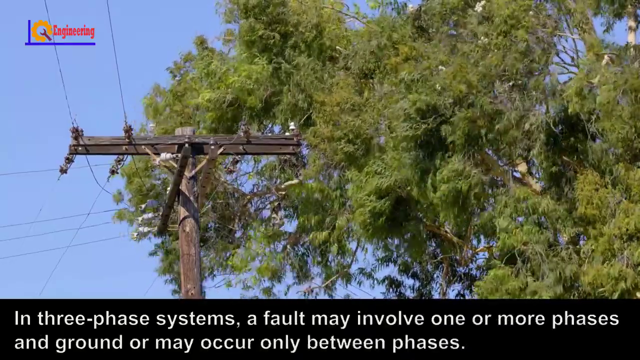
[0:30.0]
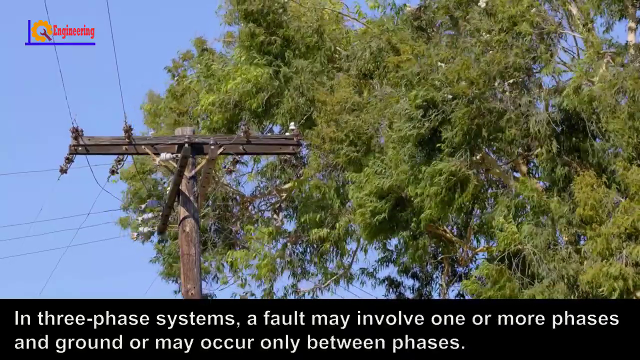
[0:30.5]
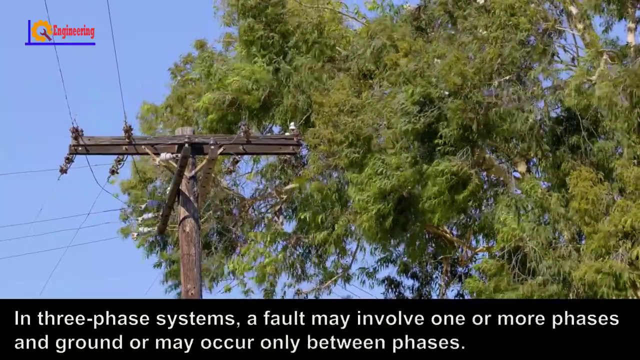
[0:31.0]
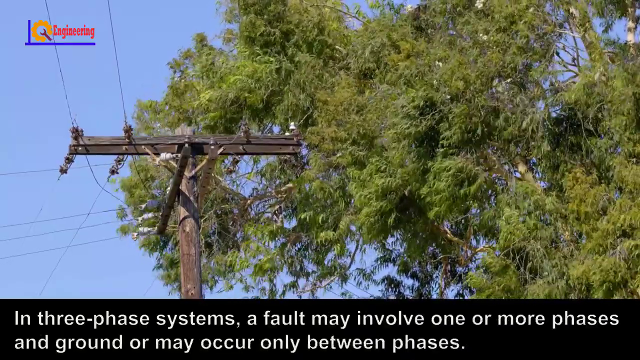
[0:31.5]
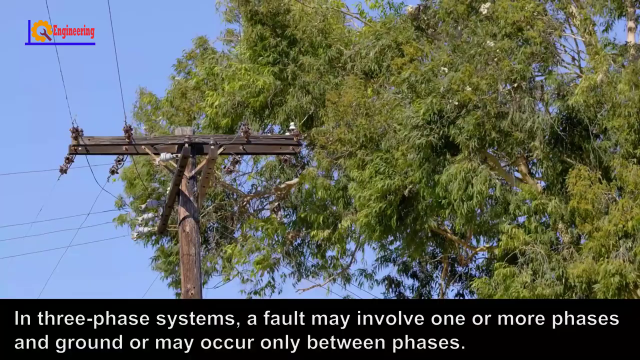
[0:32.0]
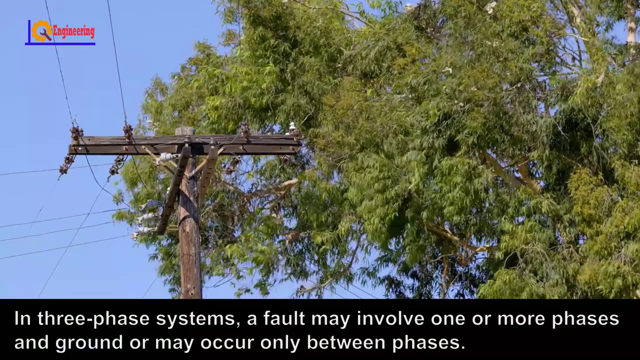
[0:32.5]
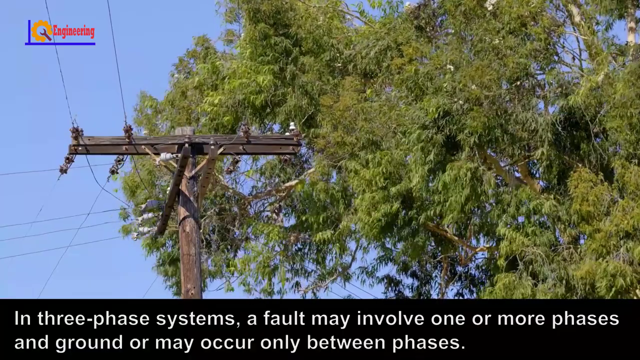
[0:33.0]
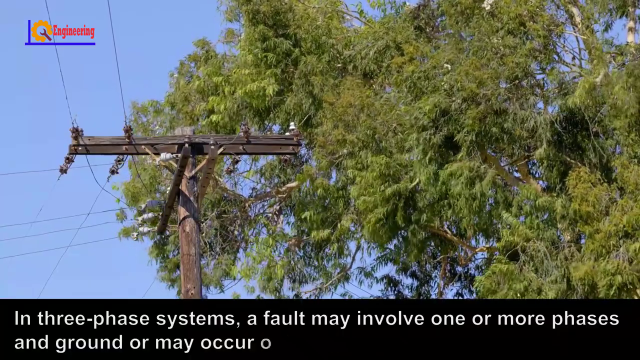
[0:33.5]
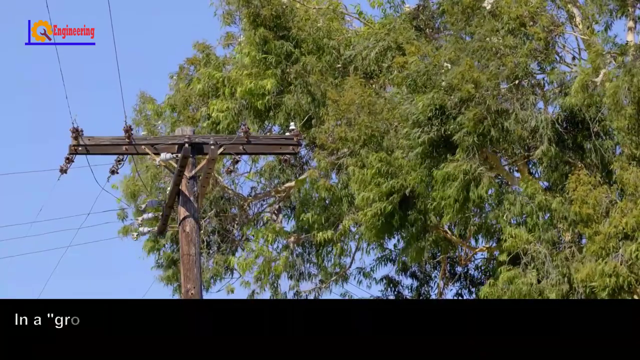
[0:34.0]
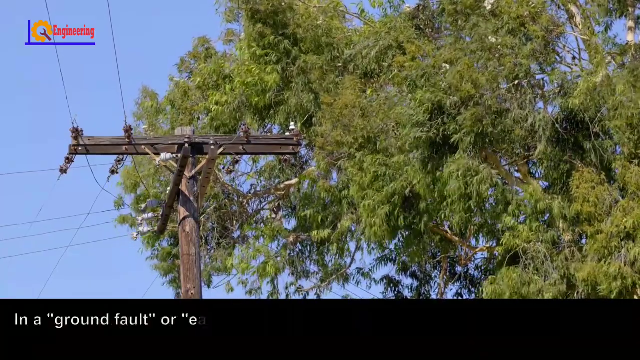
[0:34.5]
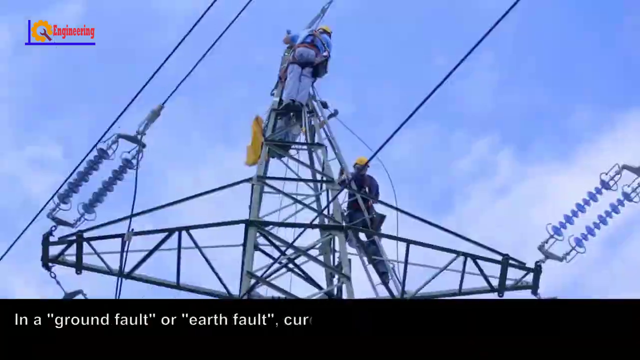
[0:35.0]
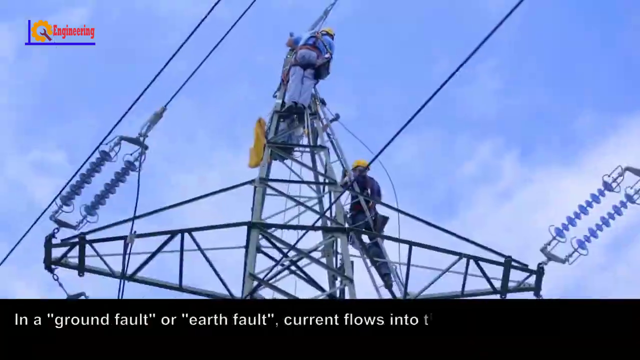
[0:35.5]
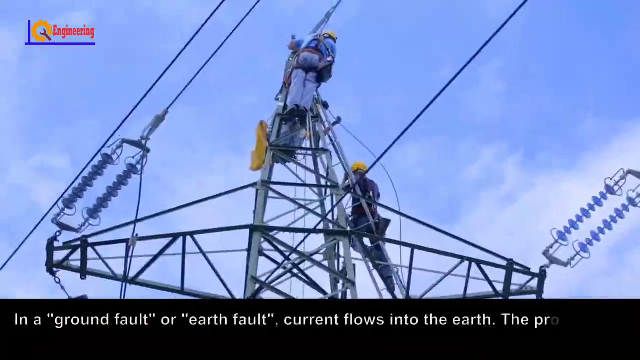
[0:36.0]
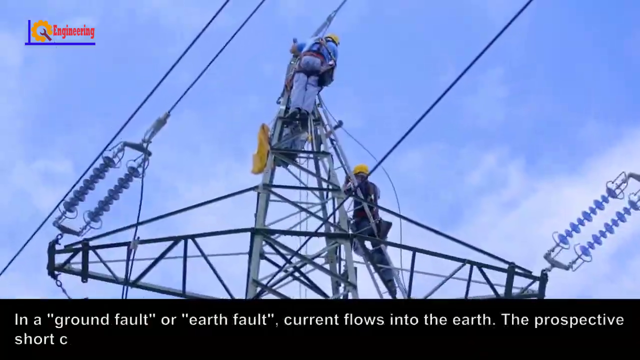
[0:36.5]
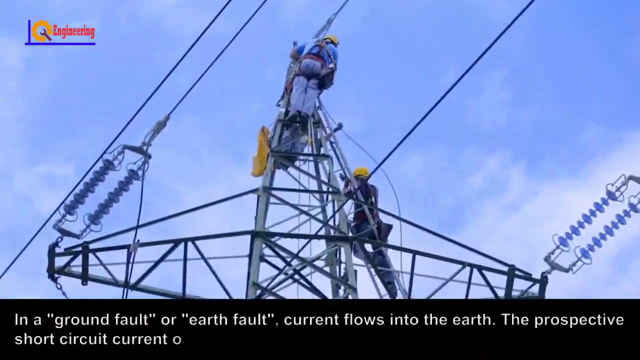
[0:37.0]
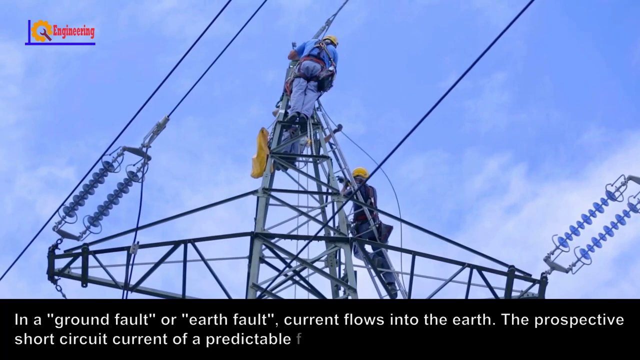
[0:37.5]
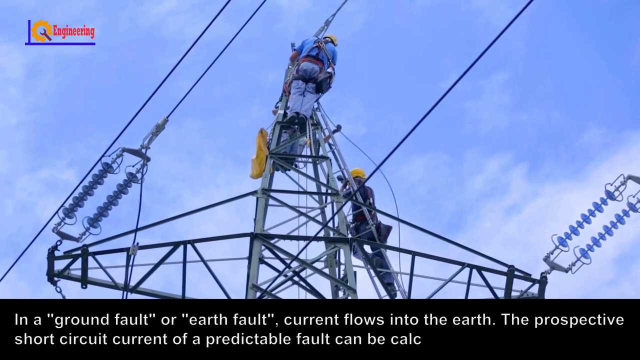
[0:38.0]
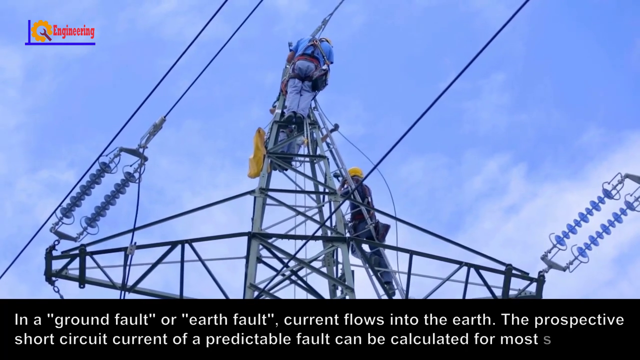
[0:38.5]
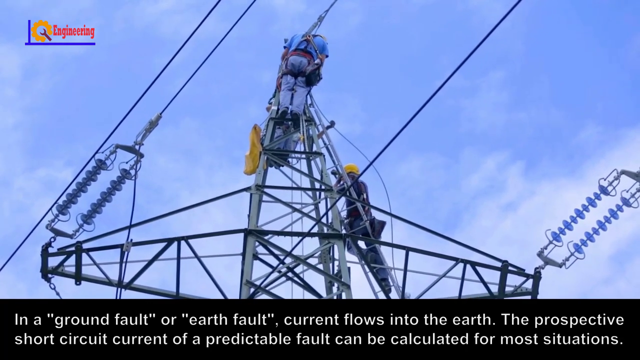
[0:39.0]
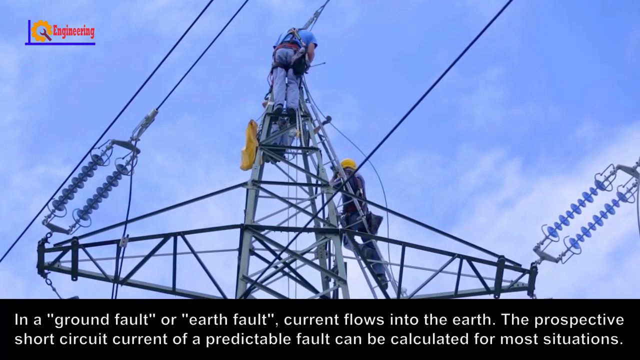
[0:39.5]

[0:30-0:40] The video shows that in three phases, a fault may involve one of the power lines. Footage shows workers working on a power line while it is live. A line that looks old appears, and the workers are either fixing a broken line or installing a new one. They work in a pair, both wearing blue and hard hats, outside in apparently stable conditions.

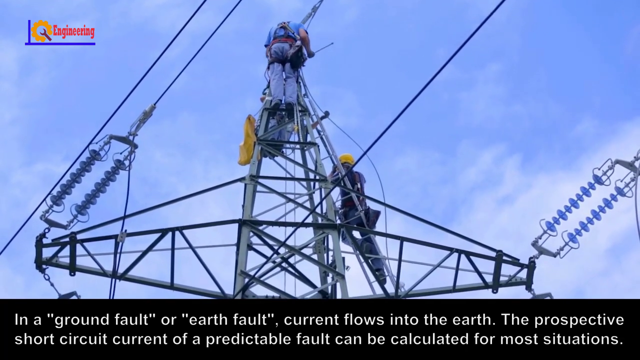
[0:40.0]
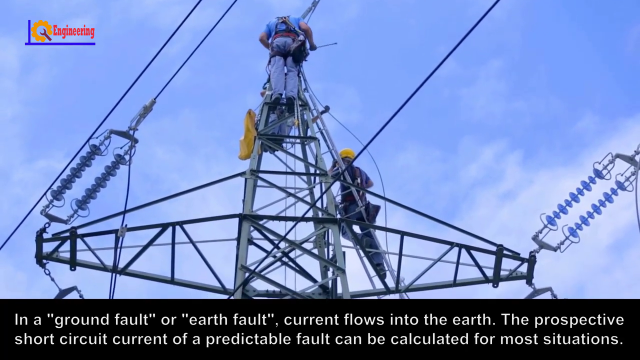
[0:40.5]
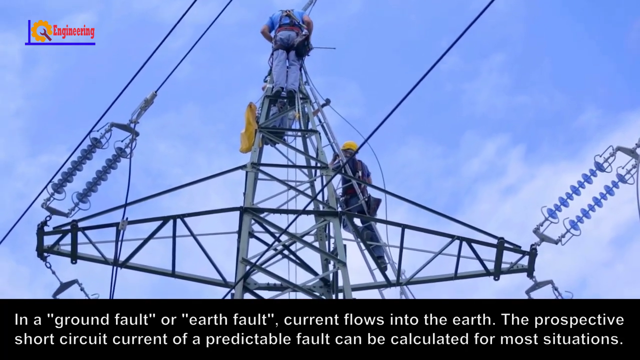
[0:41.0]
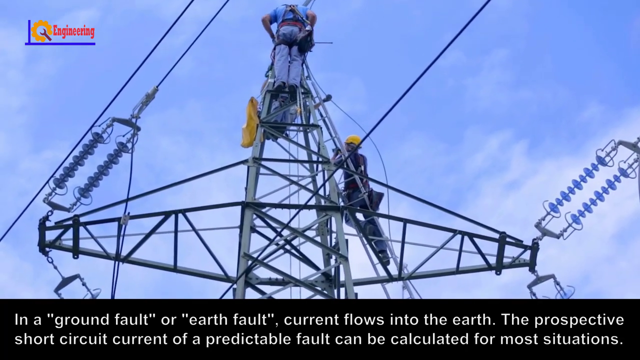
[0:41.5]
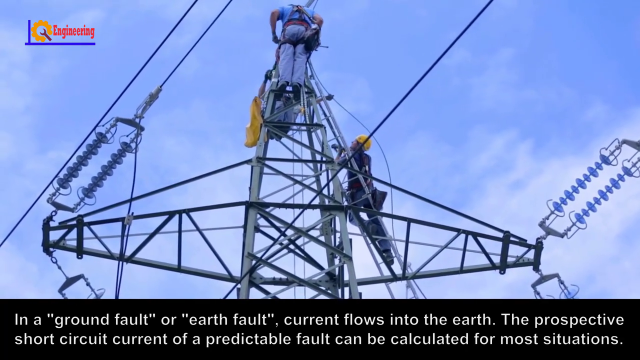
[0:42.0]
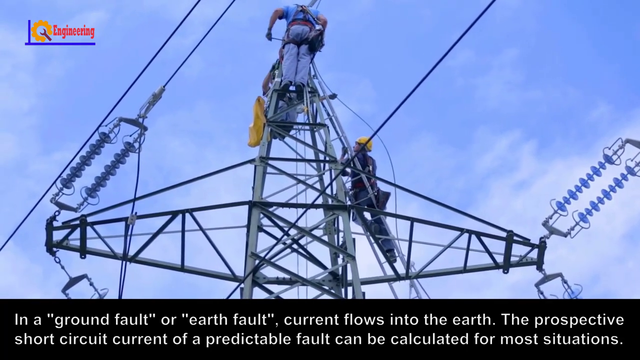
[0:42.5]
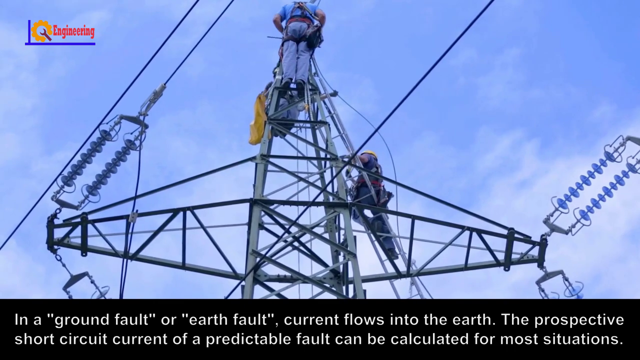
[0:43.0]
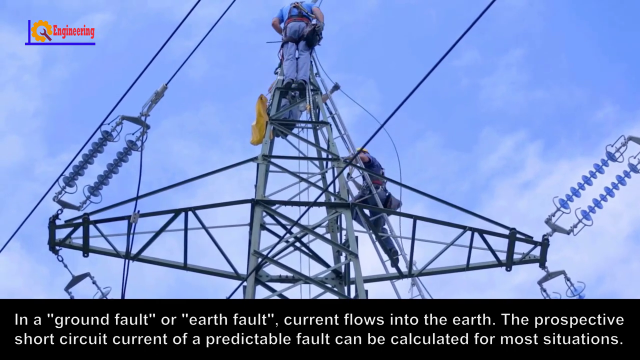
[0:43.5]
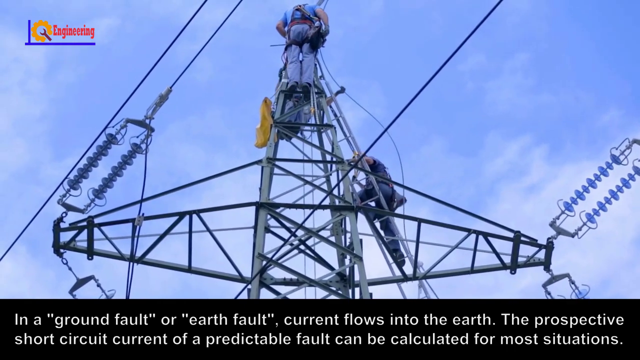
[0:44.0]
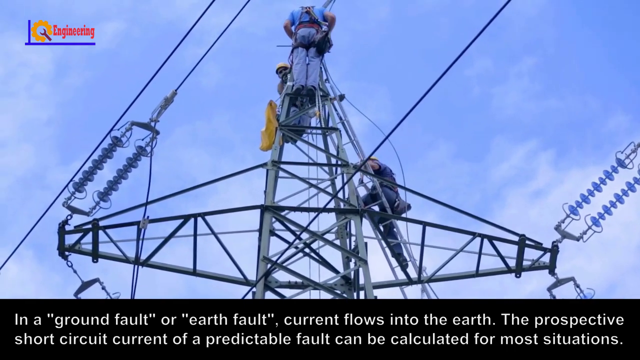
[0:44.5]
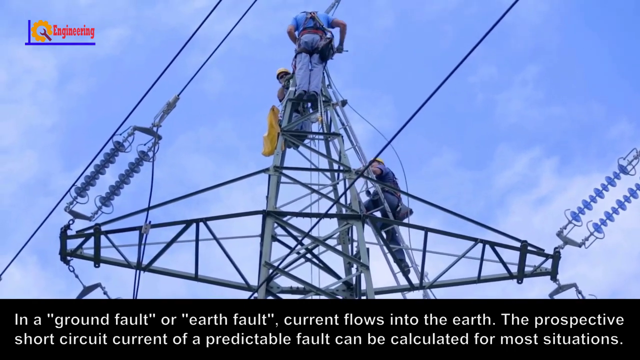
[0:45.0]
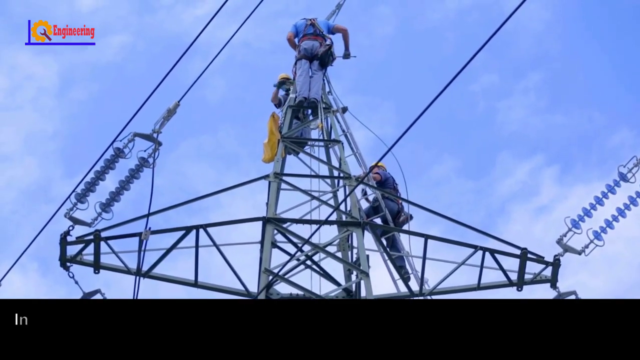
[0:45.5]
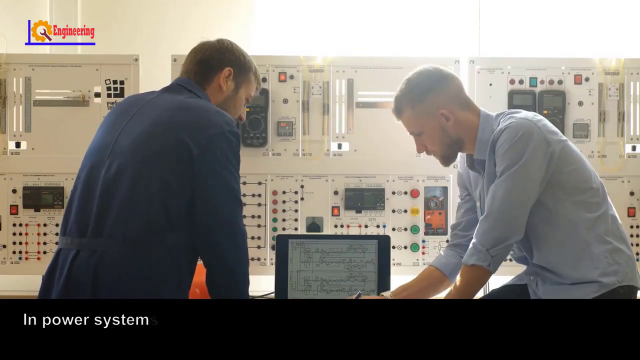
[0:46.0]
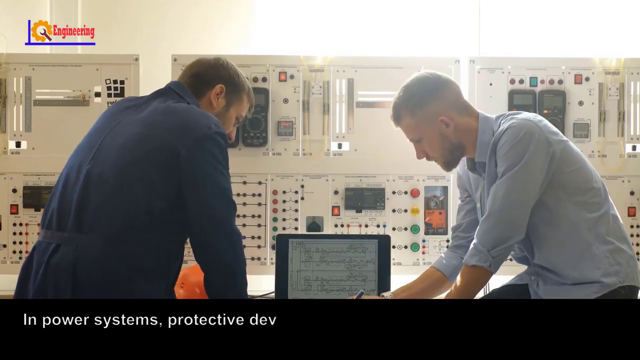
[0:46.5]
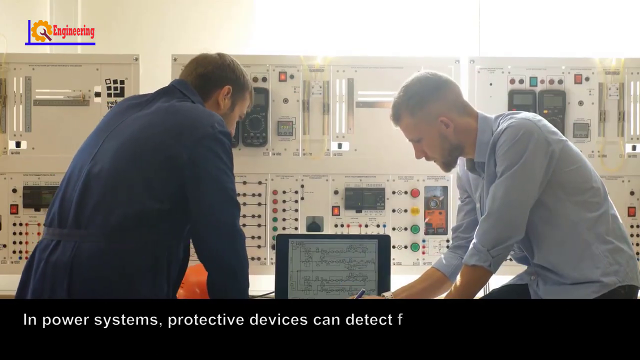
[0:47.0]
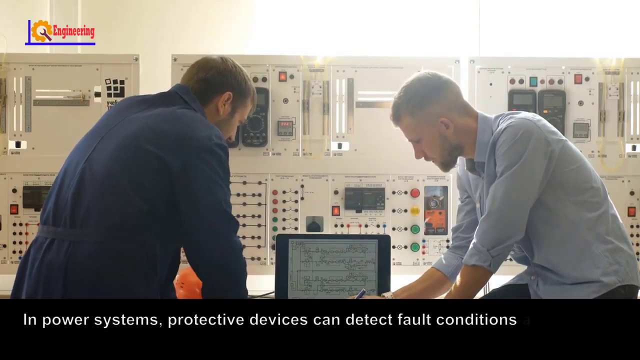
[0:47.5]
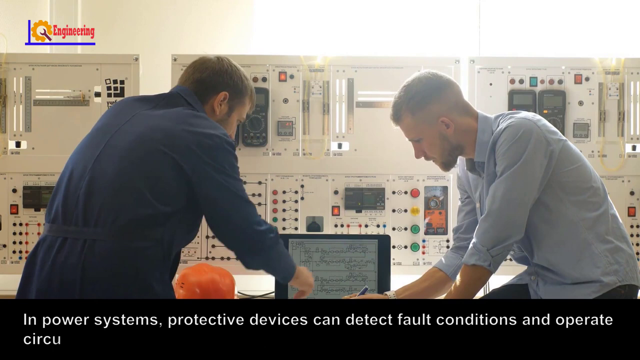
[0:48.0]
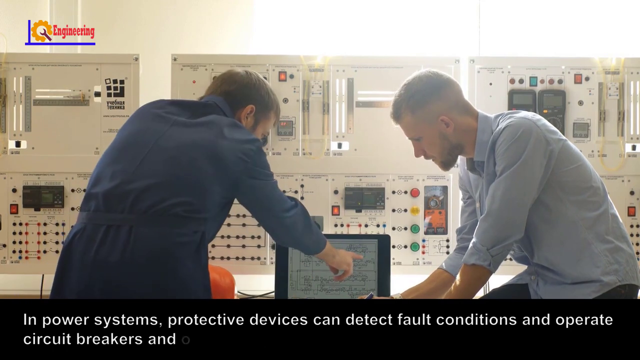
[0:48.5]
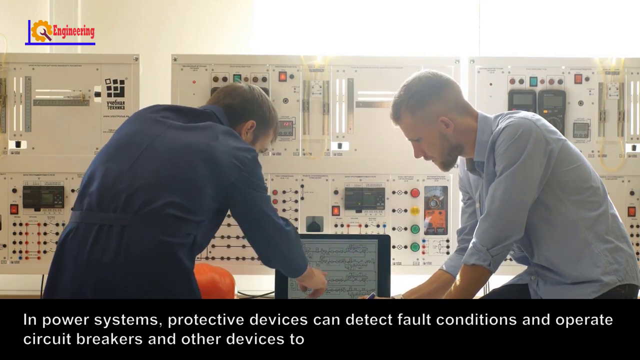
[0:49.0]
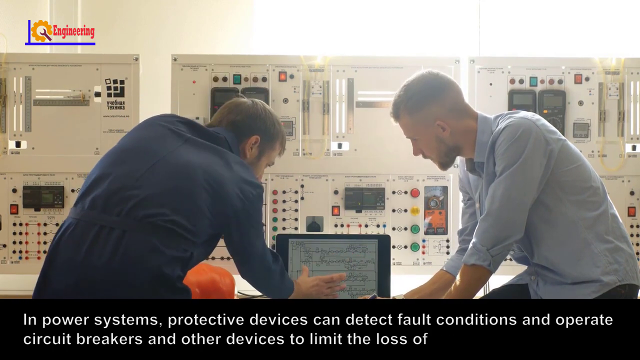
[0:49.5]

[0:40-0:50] The workers keep working on installing the new power line, and there is a third worker. They appear to be working as a team. Inside the plant, two engineers are working, and there appears to be a discussion between the plant manager and an engineer in the workspace.